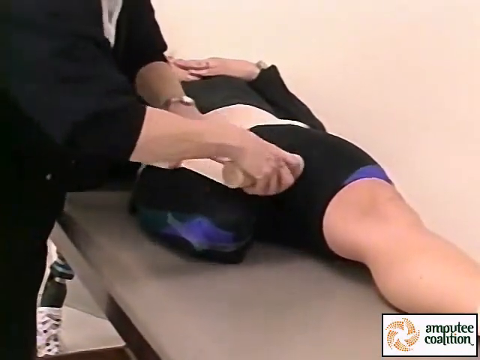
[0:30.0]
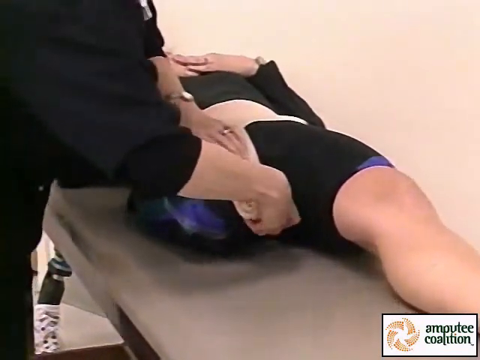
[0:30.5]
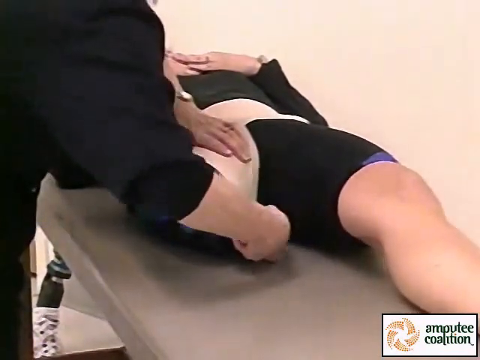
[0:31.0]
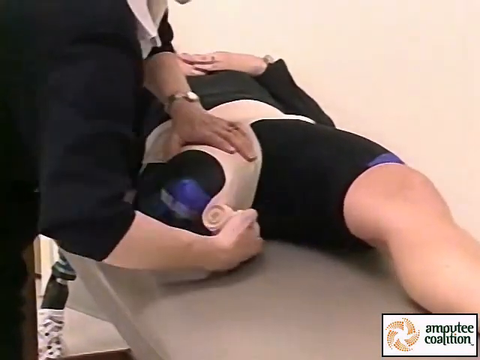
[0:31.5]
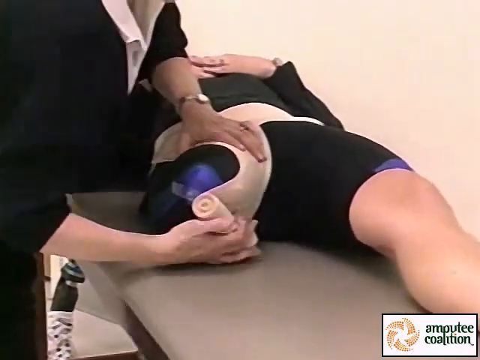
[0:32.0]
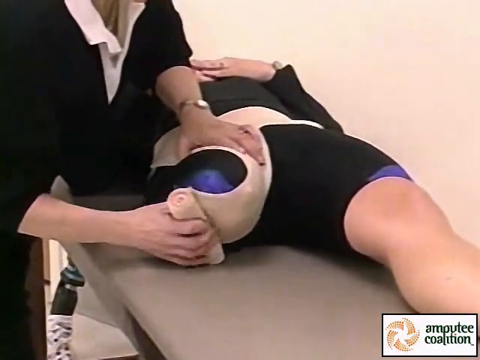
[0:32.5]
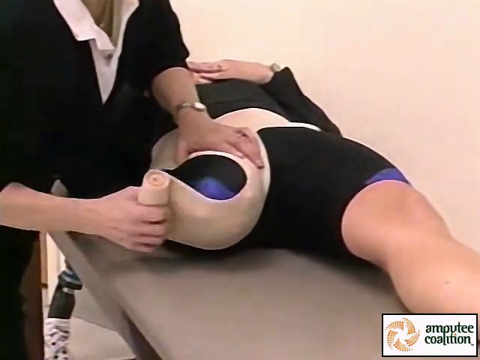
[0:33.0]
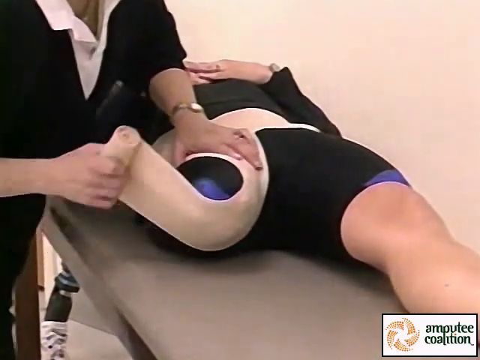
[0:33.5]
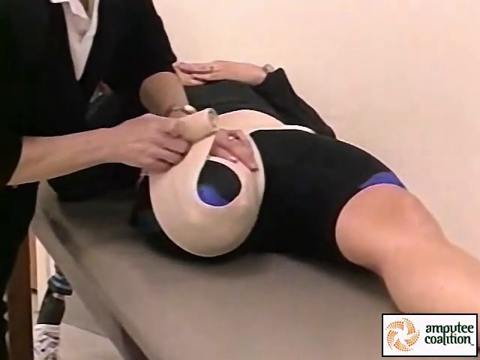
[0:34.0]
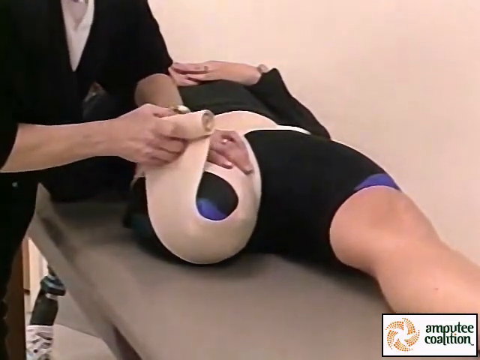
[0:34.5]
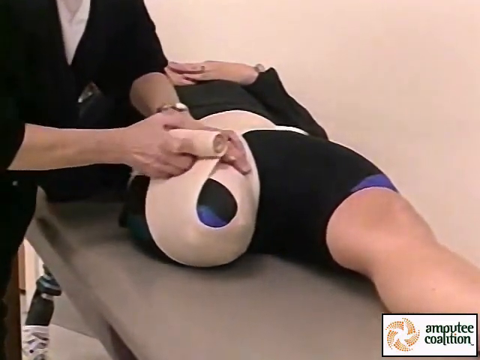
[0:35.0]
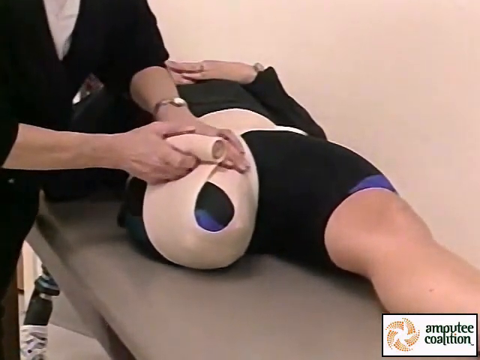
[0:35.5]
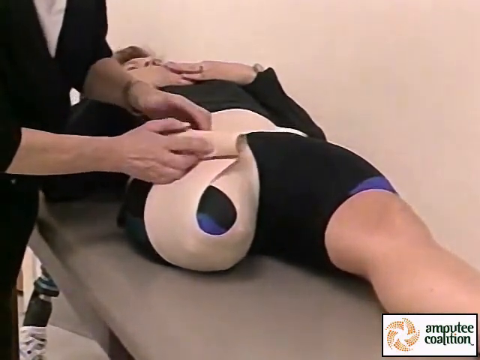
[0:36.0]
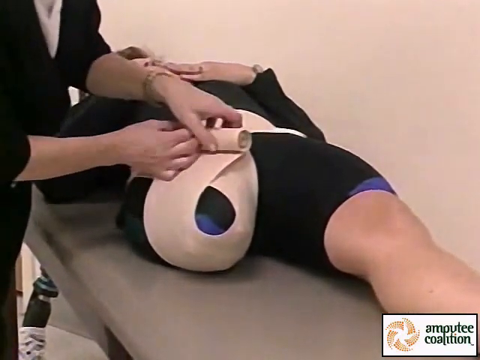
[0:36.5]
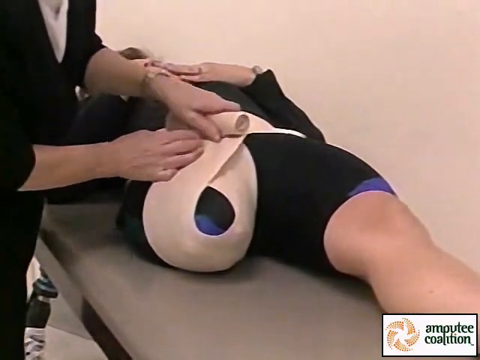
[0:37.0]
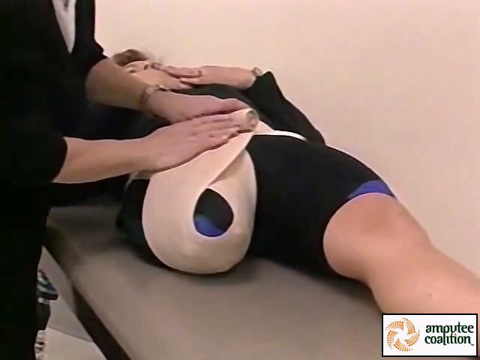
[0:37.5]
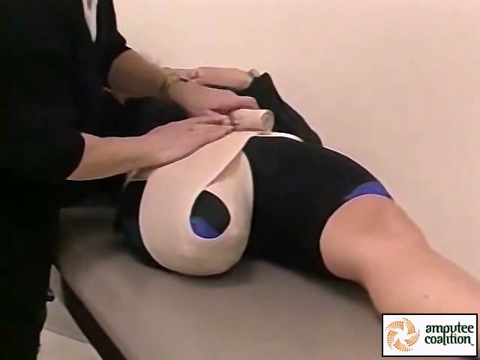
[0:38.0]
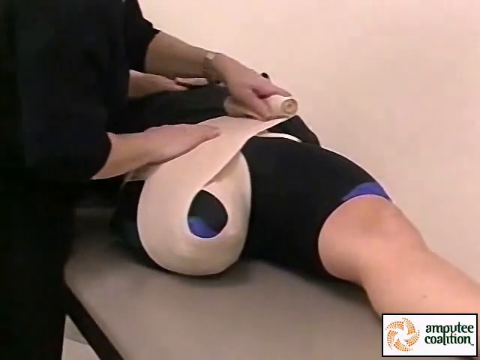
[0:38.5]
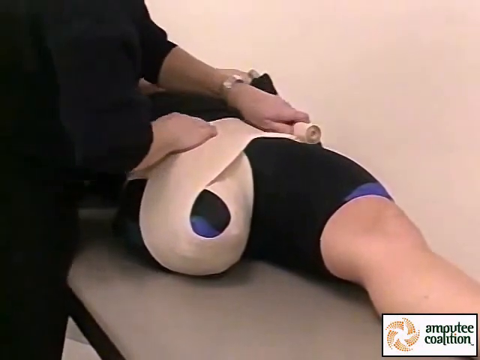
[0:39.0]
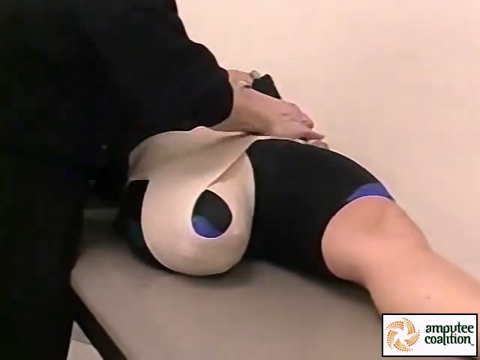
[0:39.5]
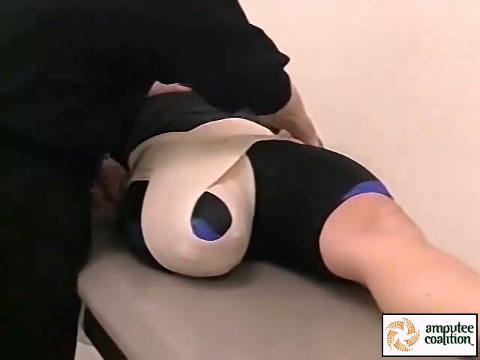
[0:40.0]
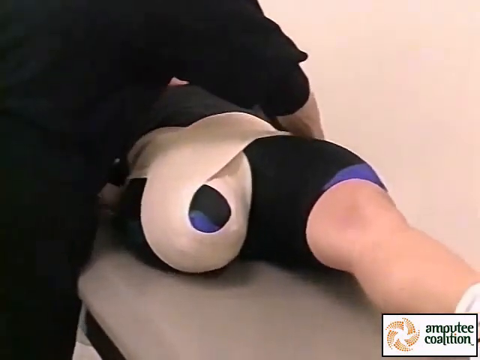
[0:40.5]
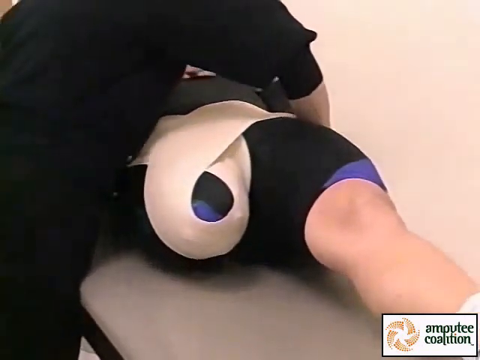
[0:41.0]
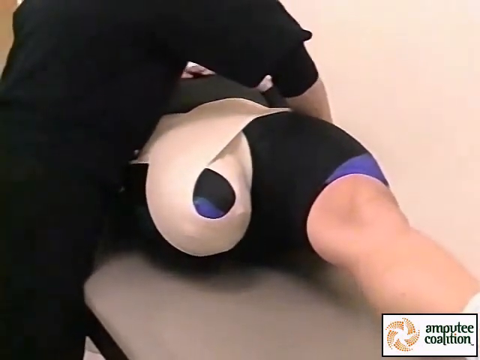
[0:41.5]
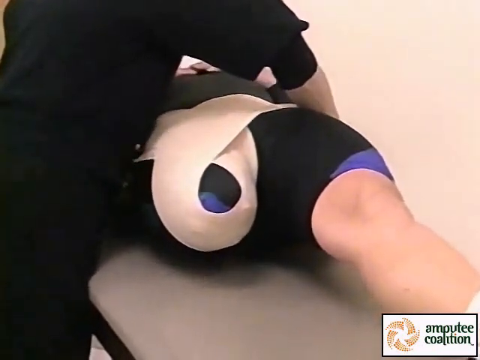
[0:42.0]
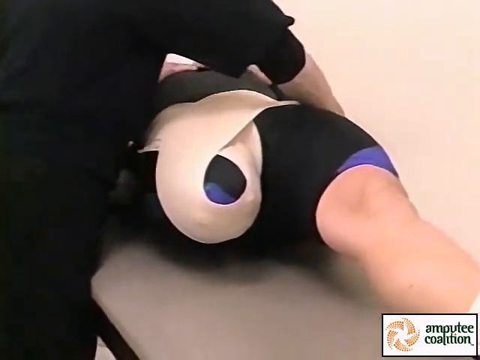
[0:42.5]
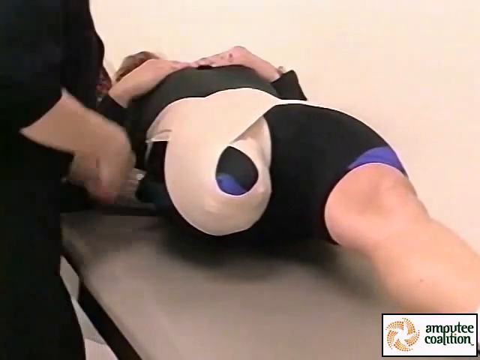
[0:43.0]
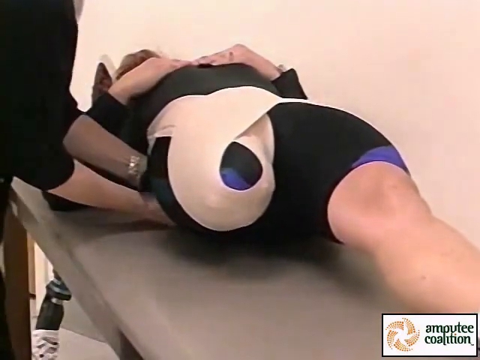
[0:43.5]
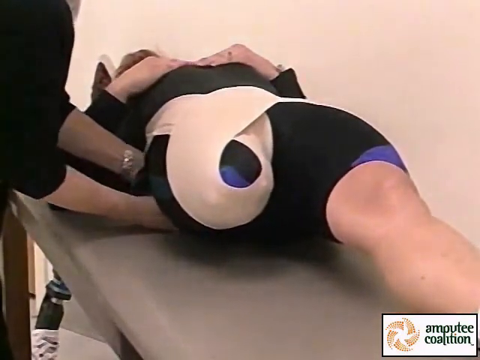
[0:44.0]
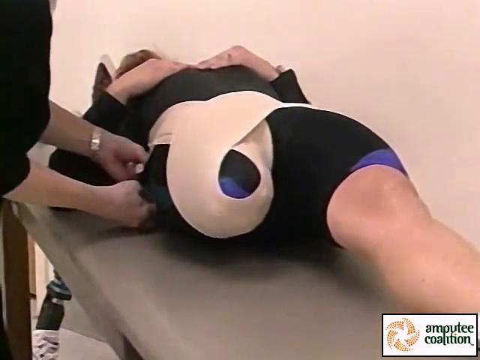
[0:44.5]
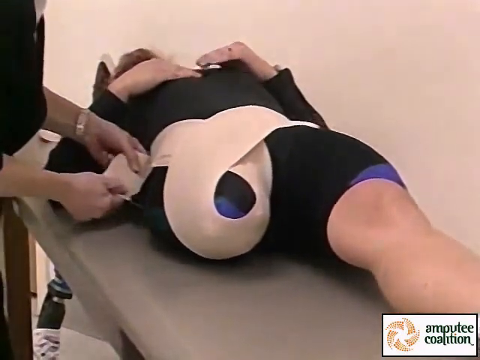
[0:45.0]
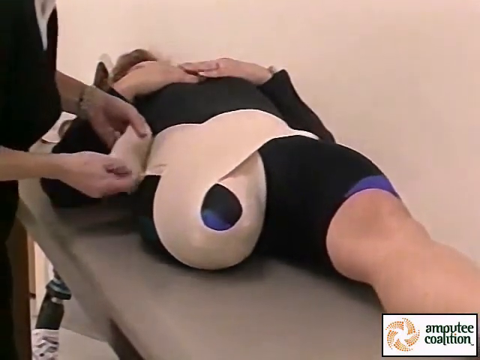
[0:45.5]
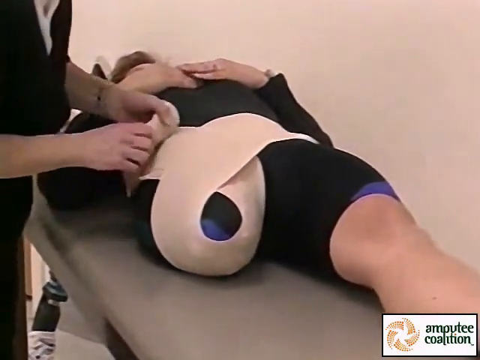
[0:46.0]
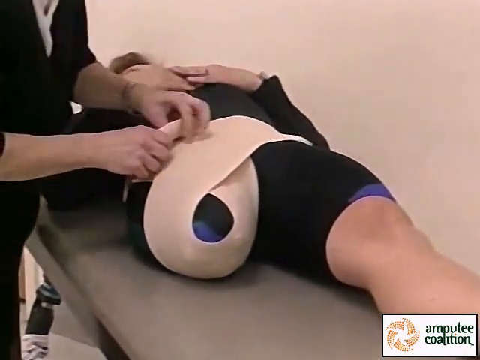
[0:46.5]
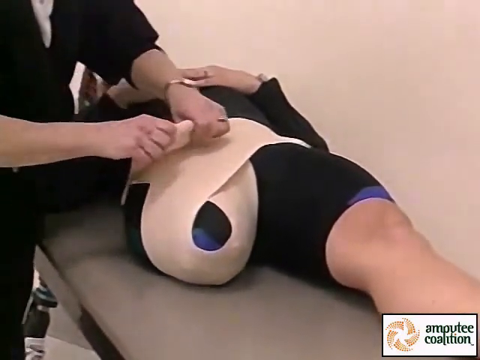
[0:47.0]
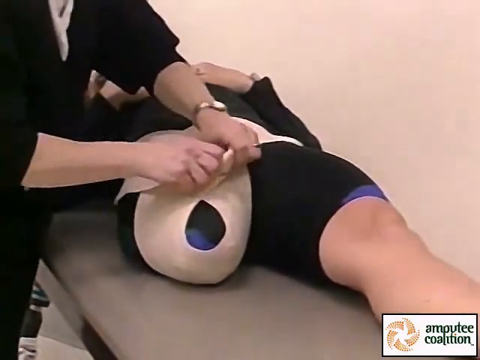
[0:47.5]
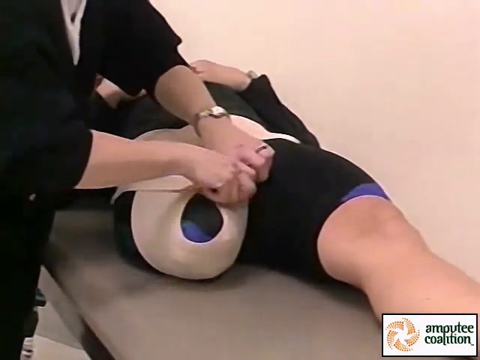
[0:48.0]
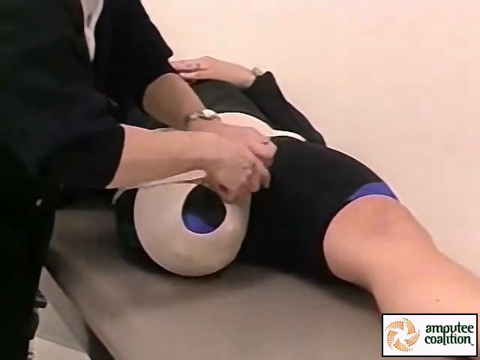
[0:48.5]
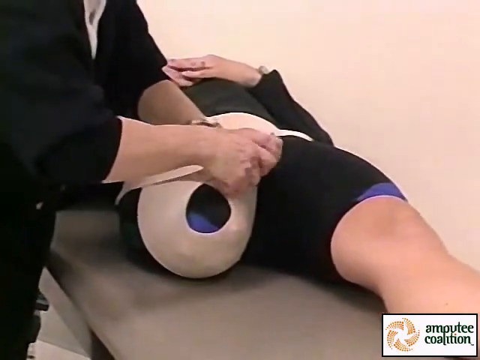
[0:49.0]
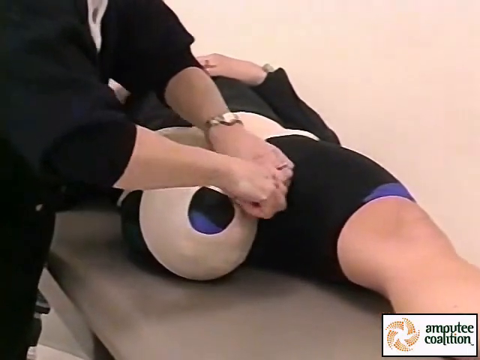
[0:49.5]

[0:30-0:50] A person lies flat on their back on a brown mat, wearing a long-sleeved black shirt and tight spandex shorts with purple on the tips. They have only a left leg and are missing their right leg. A person stands on the left side of the bed, visible only from the neck down, wearing black pants and a black shirt with a white shirt underneath. This person wraps a bandage around the waist of the person lying down, then around the stub where the leg is supposed to be. They then wrap the bandage around the waist, and the person on the bed leans up so the bandage can be passed underneath them and back around.